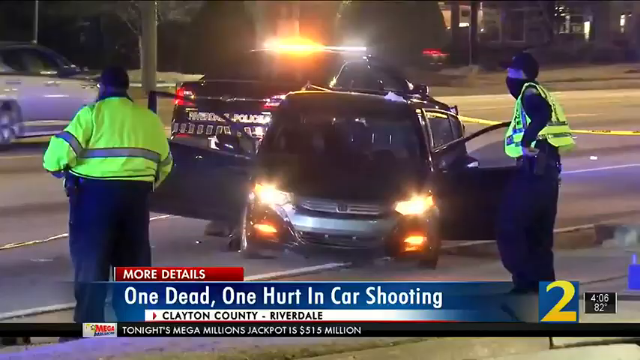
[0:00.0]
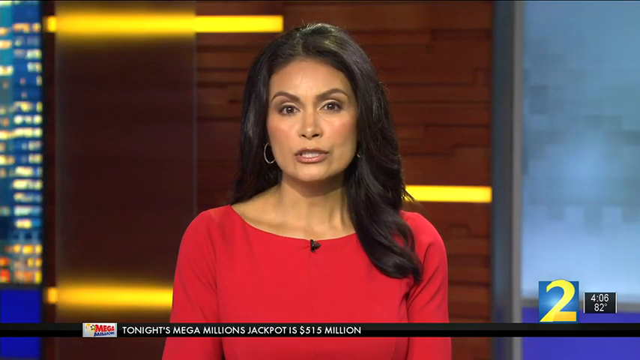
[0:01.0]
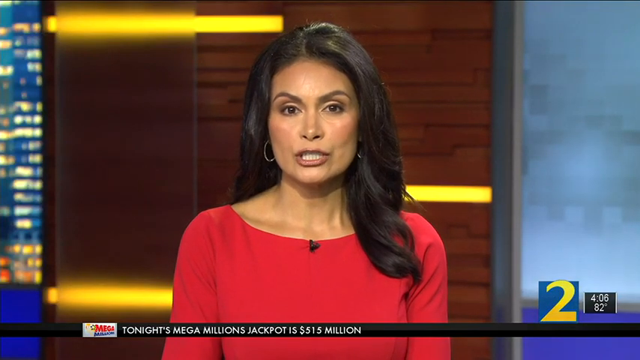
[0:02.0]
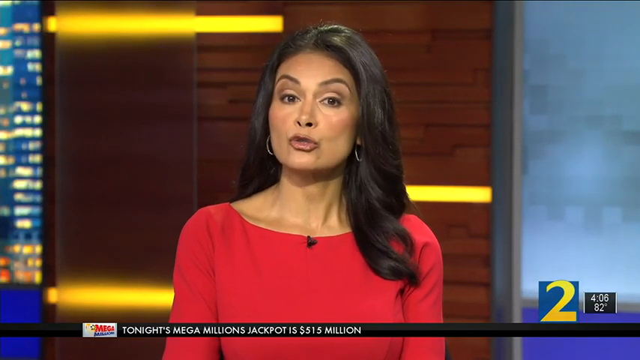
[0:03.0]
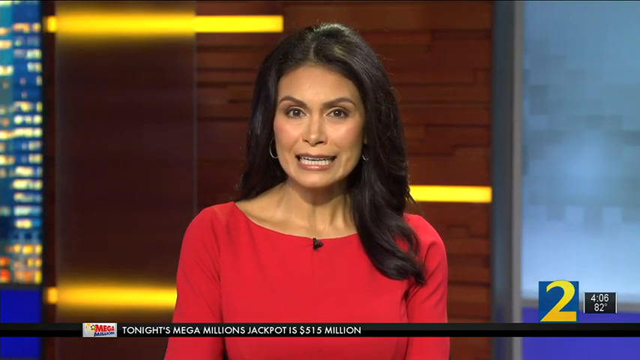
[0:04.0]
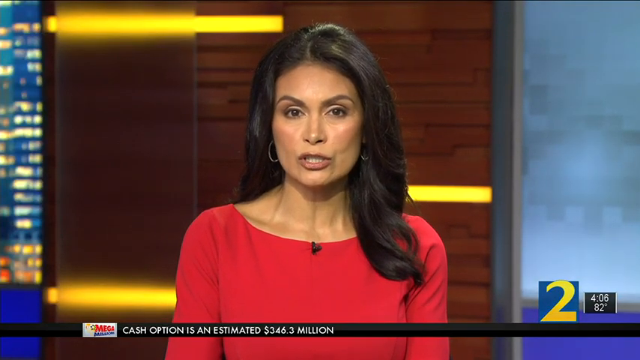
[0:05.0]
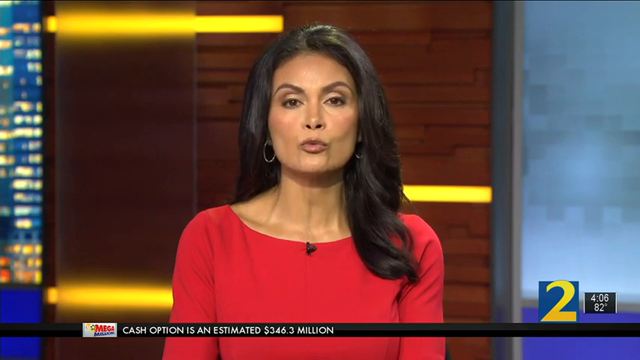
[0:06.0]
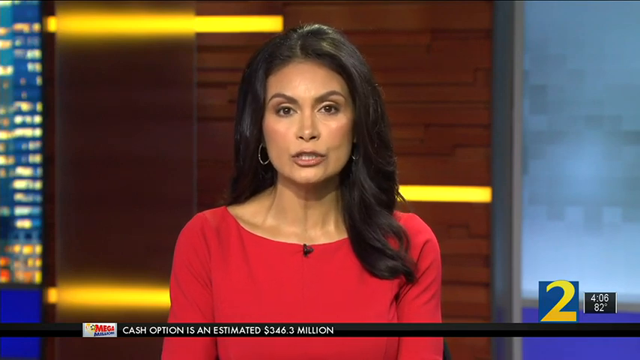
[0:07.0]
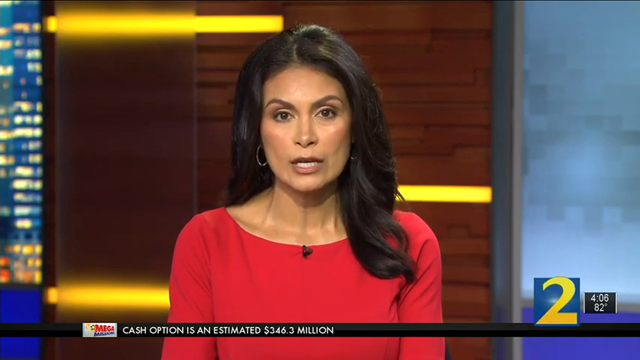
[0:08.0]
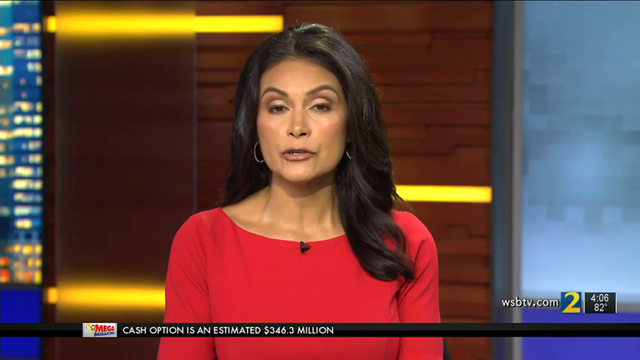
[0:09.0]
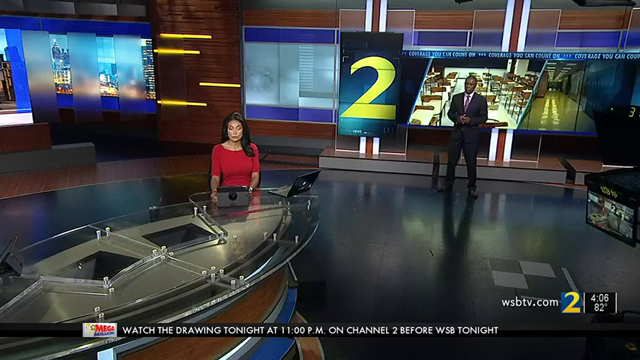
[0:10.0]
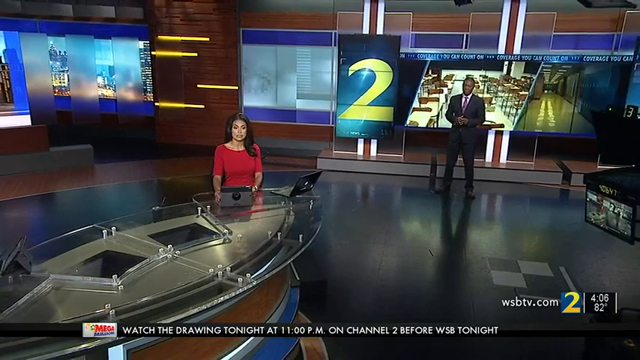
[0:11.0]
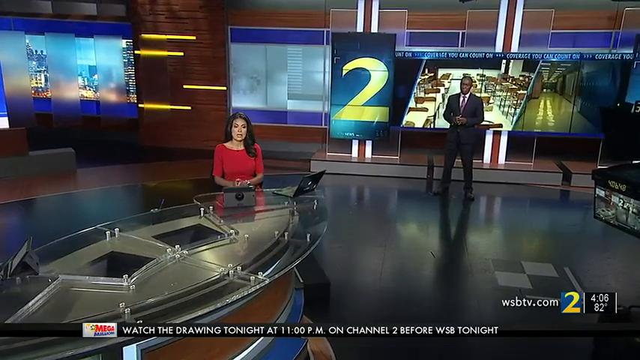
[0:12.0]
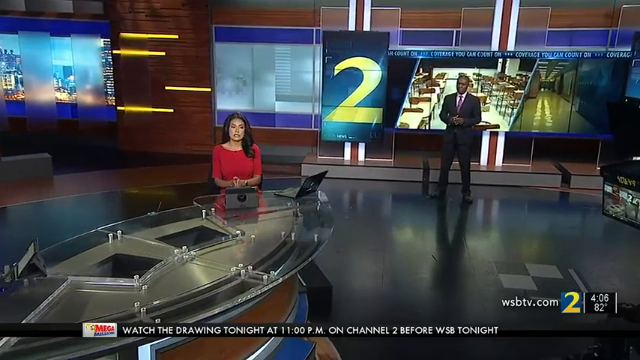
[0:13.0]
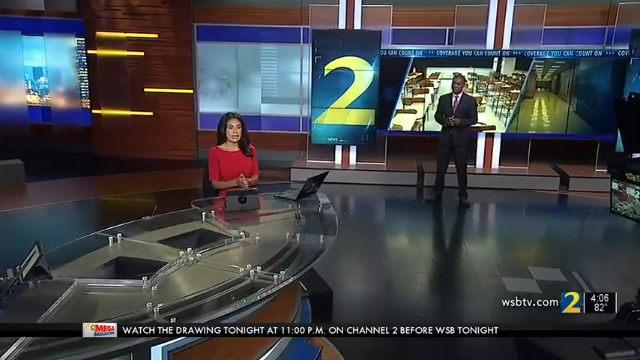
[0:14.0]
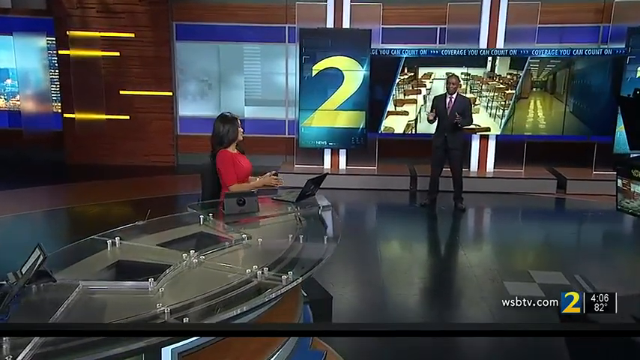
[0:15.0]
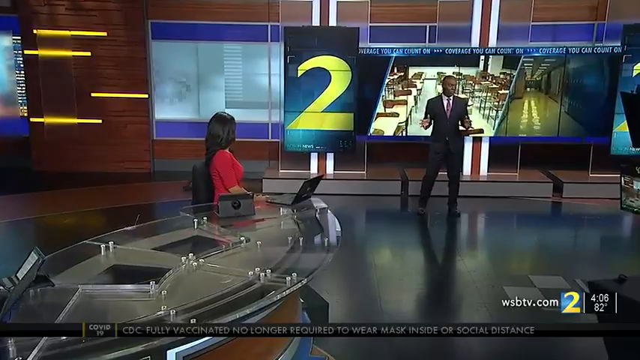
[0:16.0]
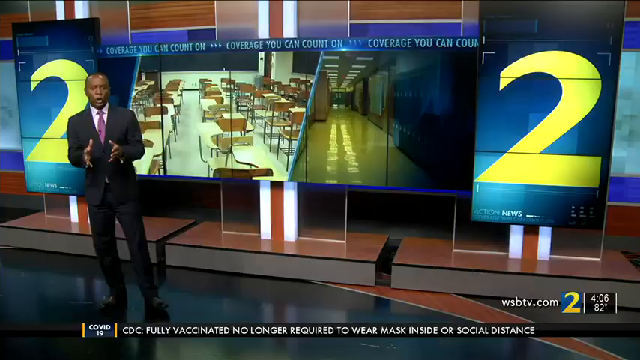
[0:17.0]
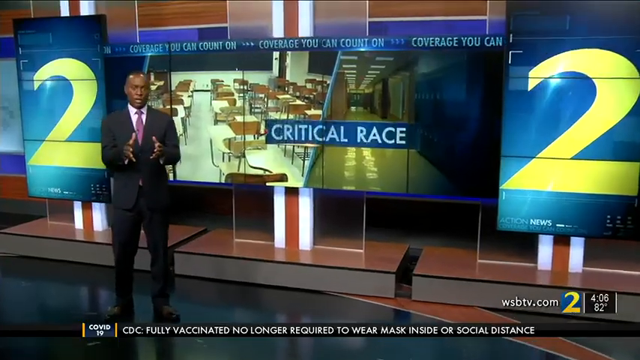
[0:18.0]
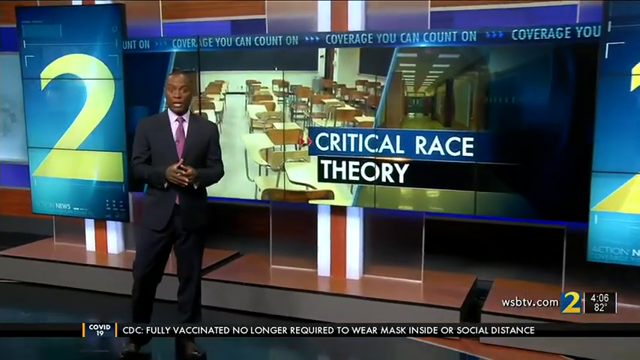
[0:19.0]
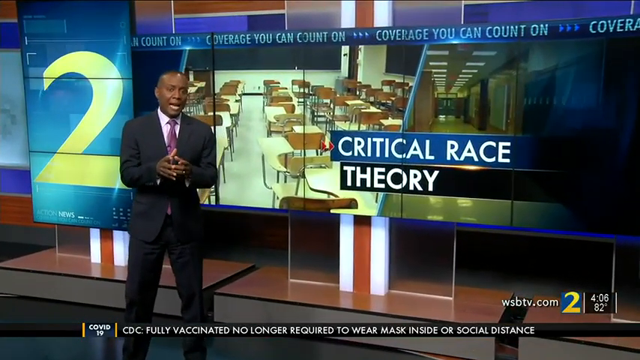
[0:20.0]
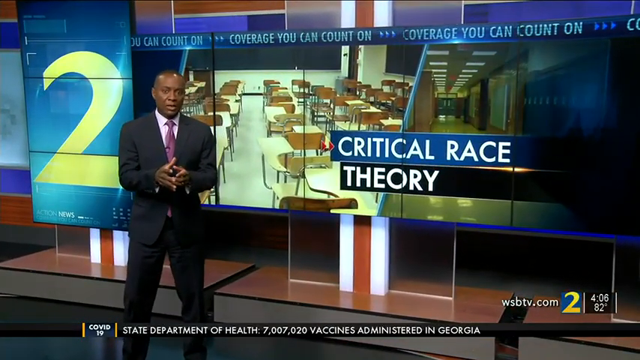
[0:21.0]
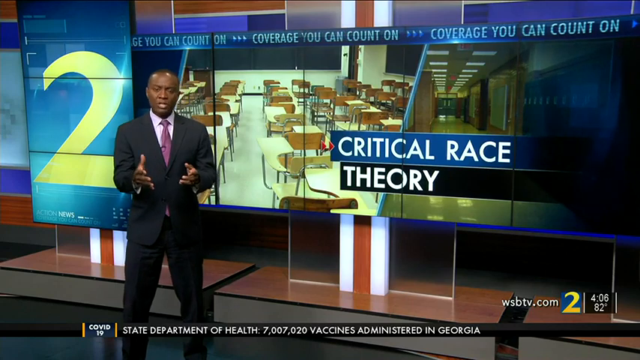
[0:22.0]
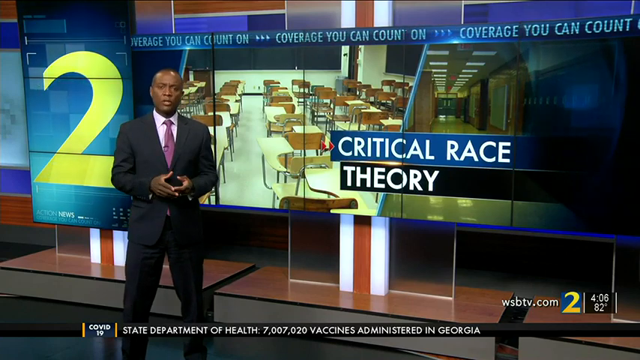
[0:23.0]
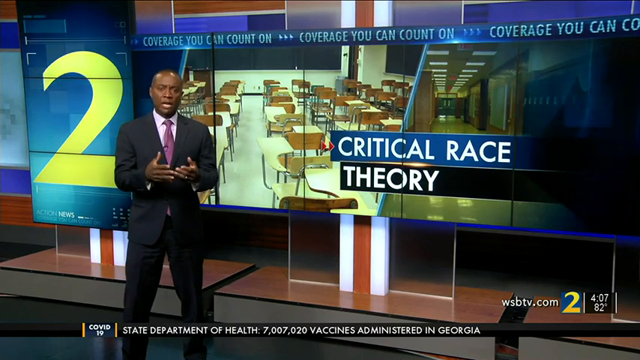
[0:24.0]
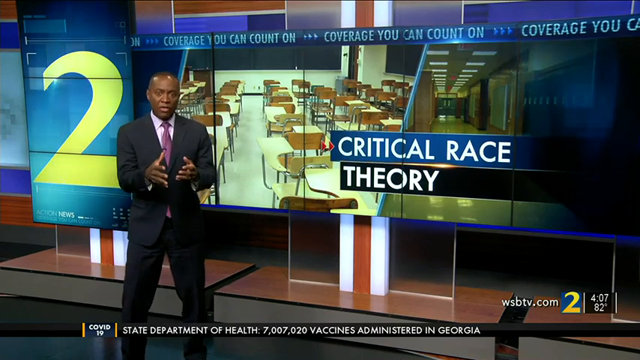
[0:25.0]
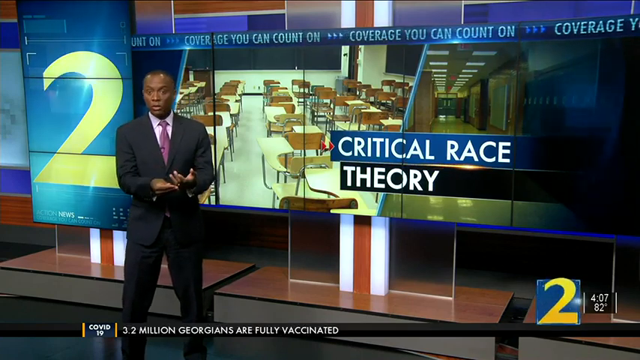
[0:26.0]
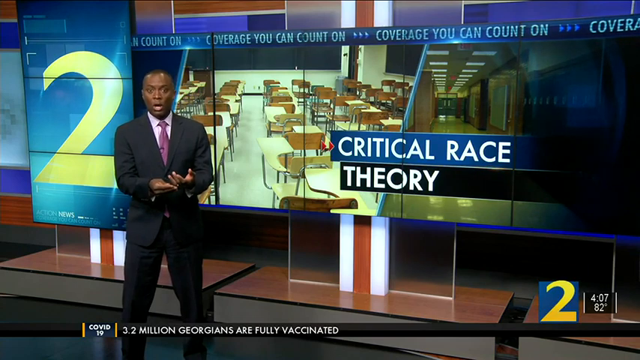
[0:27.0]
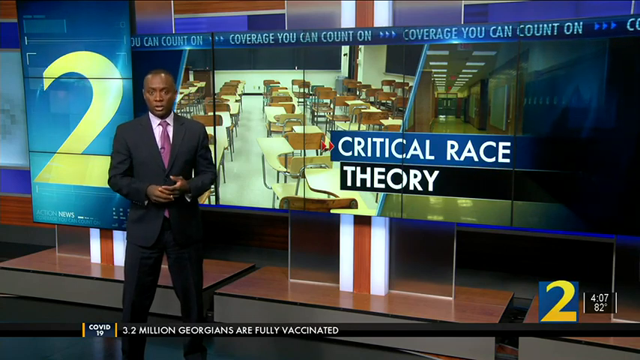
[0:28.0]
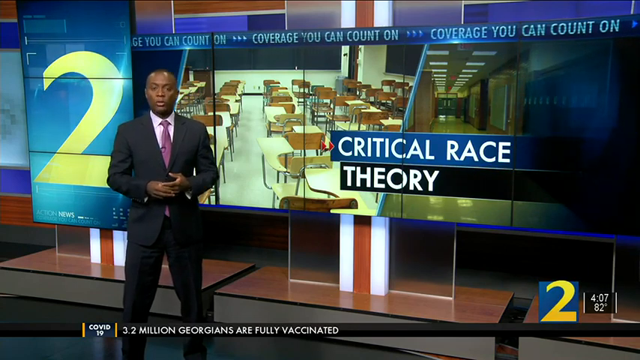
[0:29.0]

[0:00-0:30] What looks like a news scene of a car crash appears, with text reading "one dead, one hurt in car shooting, Clayton County, Riverdale." It is Channel 2 News, and the Mega Millions jackpot is shown as worth $515 million. A car is on the street with its doors wide open. A news anchor is at a desk; she wears a red shirt and has kind of olive-colored skin and long, dark hair. She talks to the screen, probably about the scene just shown. The broadcast is WSB-TV 2 News. The view pans out to show the rest of the newsroom, and she is on a Surface tablet at the desk. Another news anchor is in the back: a Black man in a black suit, a purple tie and a white shirt. The broadcast appears to move to his segment. He is standing in front of a screen, and a view of him is shown on the screen. He pops up "critical race theory," with what looks like a picture of a classroom behind it. He puts his hands together and starts to speak, apparently covering the segment.